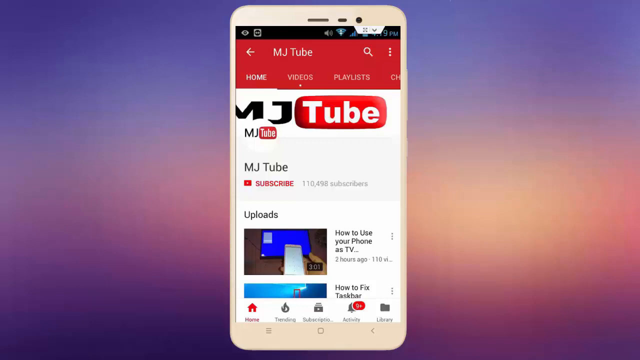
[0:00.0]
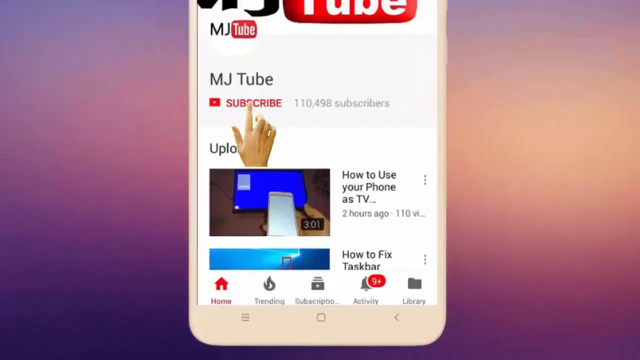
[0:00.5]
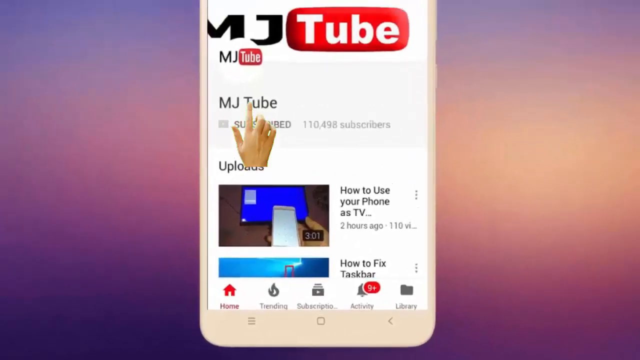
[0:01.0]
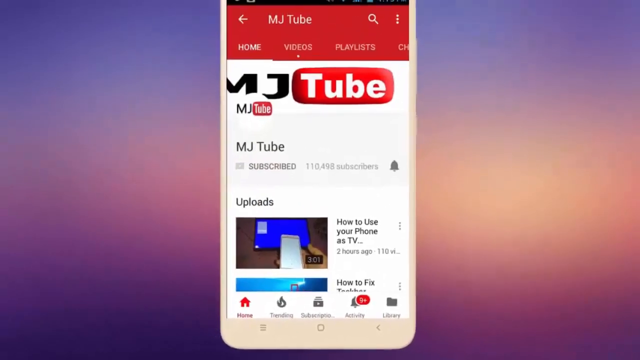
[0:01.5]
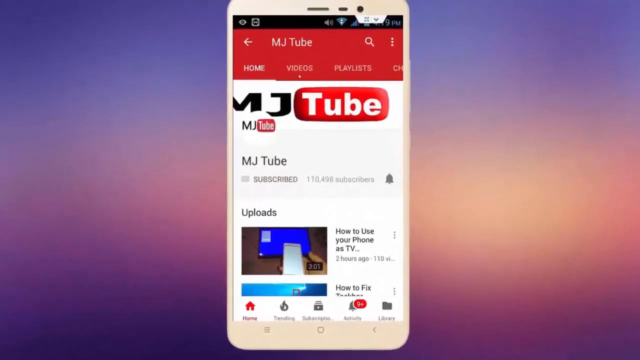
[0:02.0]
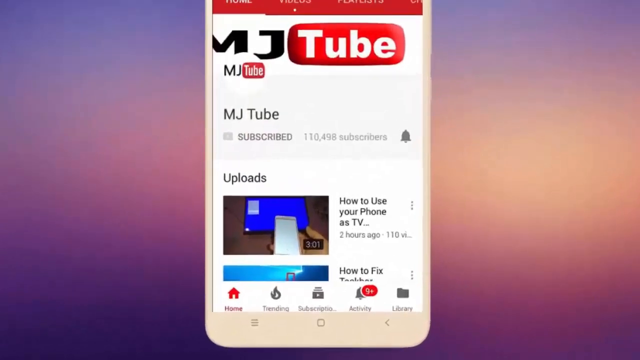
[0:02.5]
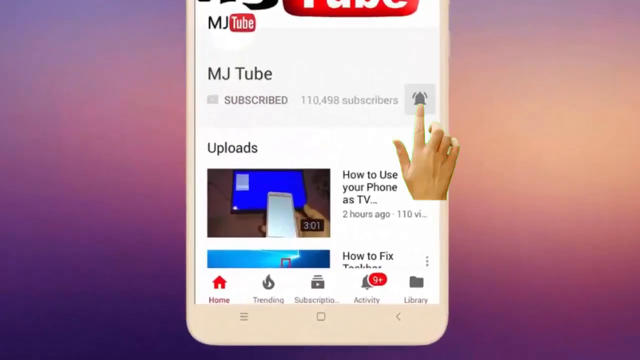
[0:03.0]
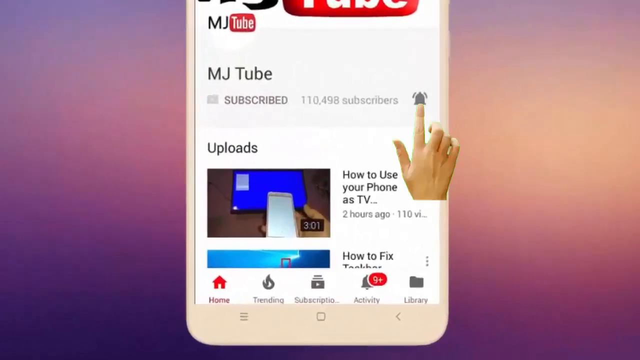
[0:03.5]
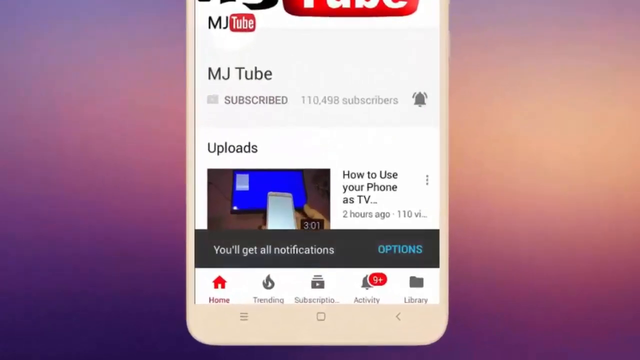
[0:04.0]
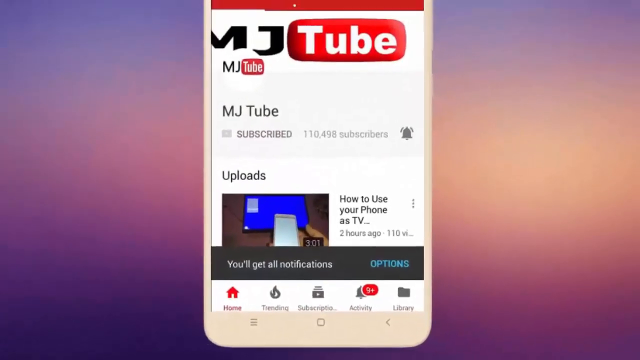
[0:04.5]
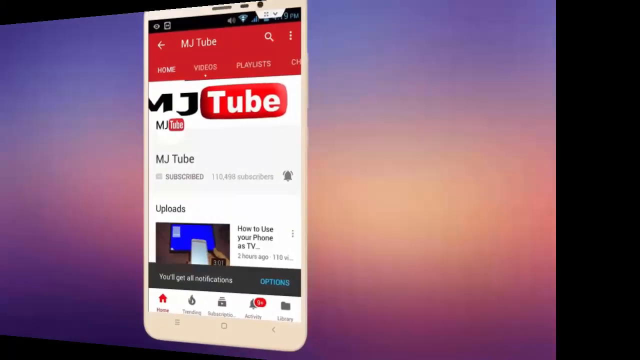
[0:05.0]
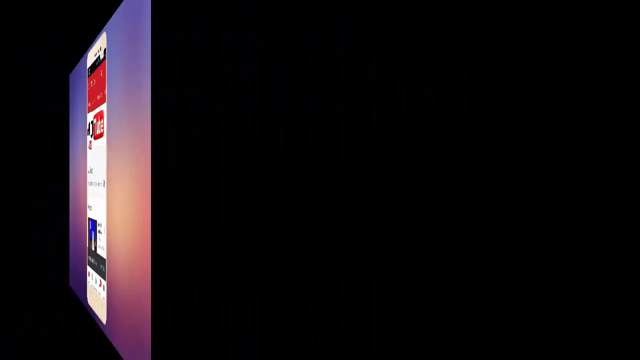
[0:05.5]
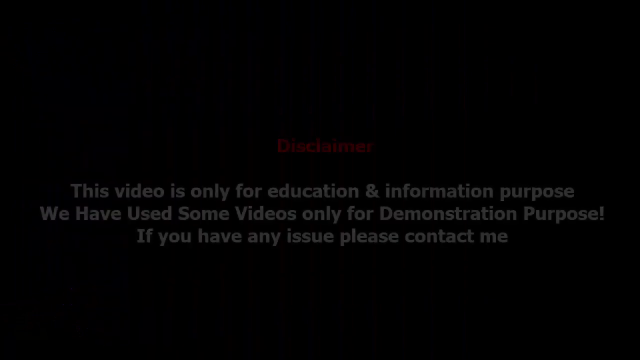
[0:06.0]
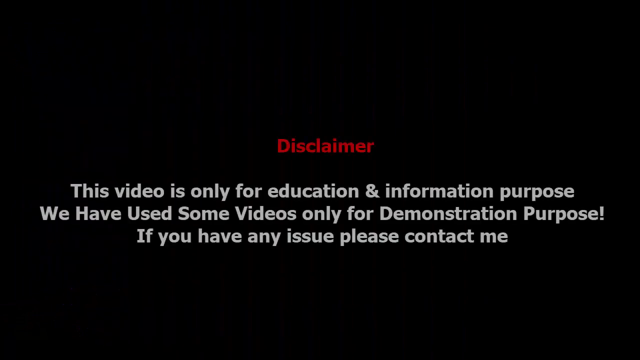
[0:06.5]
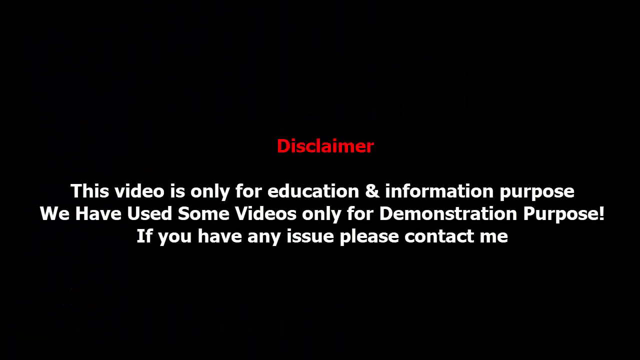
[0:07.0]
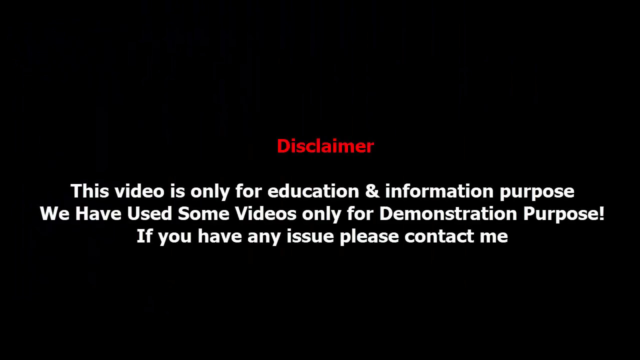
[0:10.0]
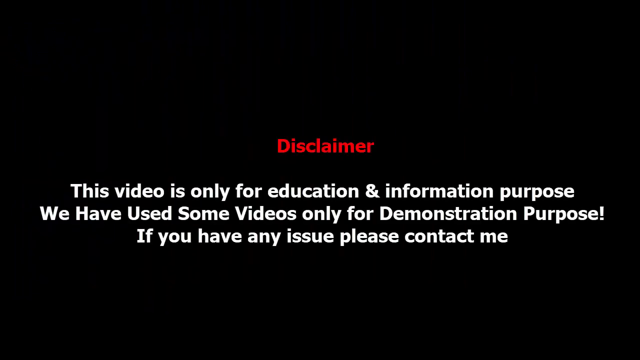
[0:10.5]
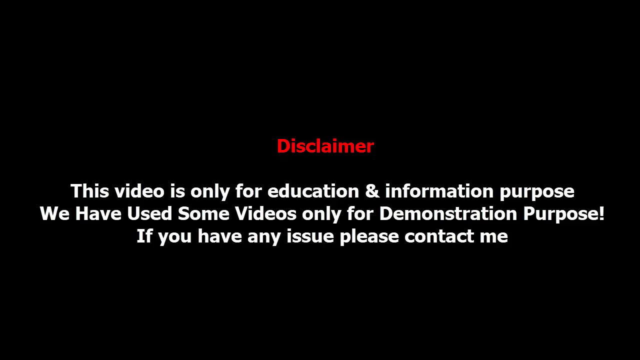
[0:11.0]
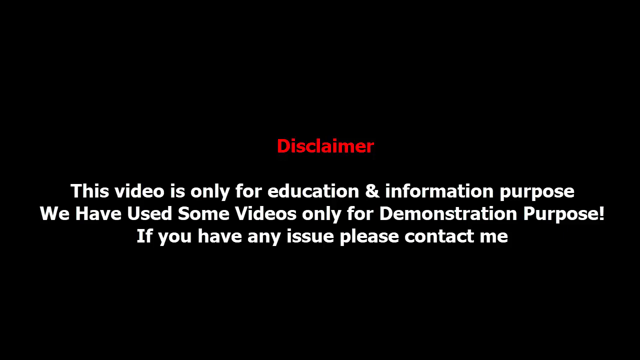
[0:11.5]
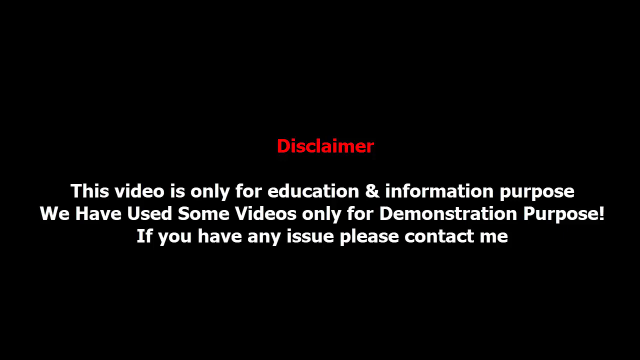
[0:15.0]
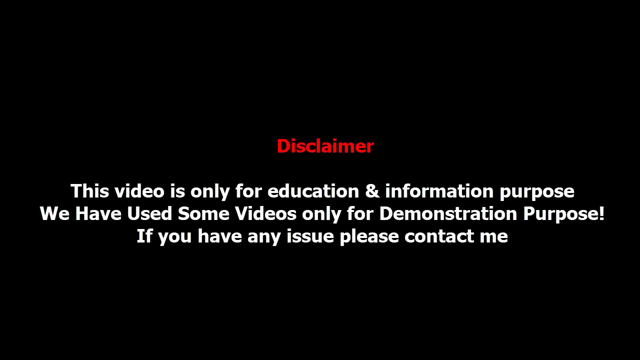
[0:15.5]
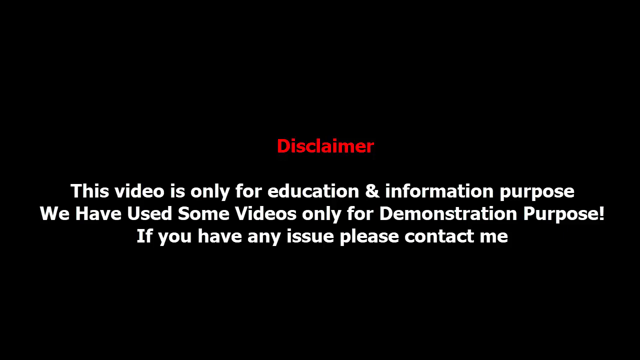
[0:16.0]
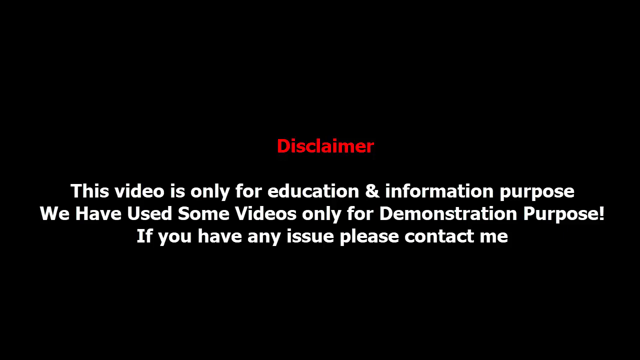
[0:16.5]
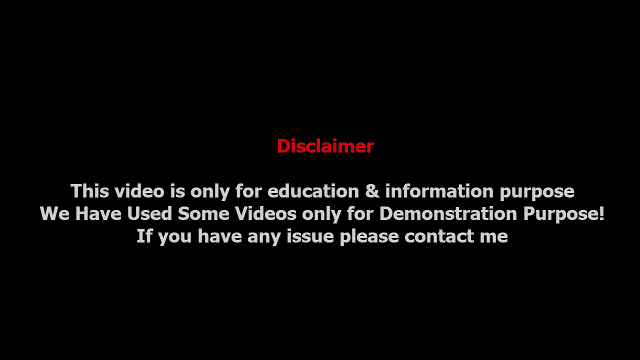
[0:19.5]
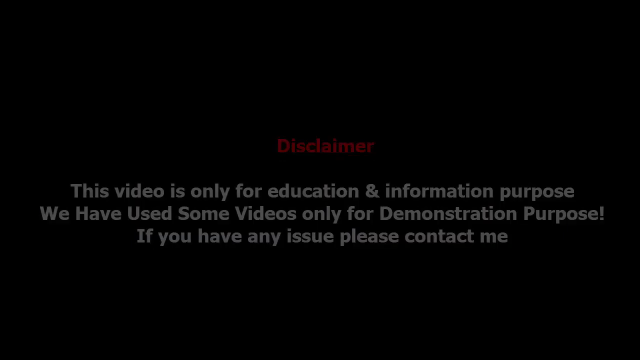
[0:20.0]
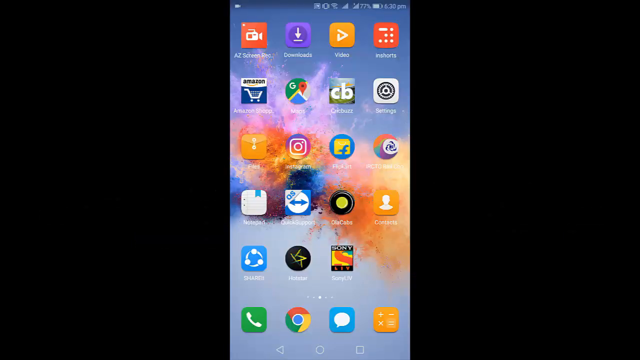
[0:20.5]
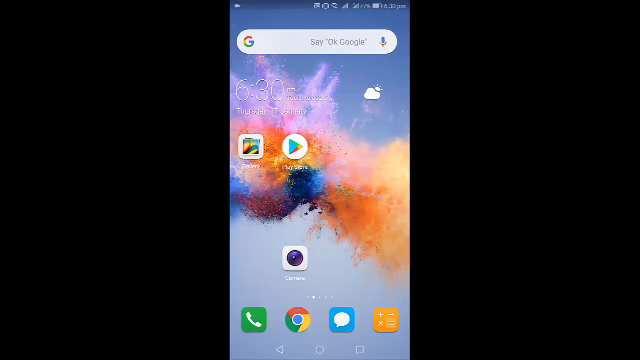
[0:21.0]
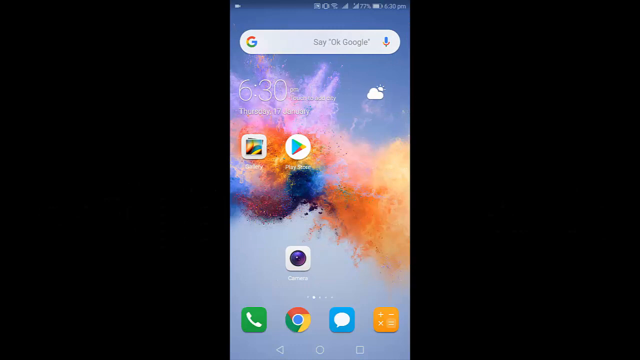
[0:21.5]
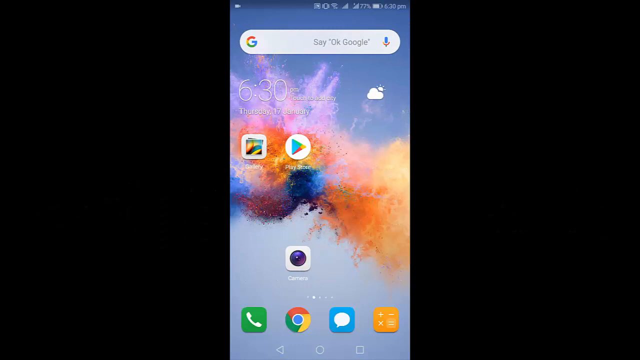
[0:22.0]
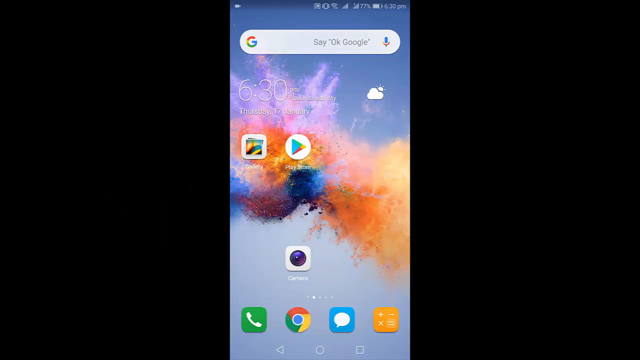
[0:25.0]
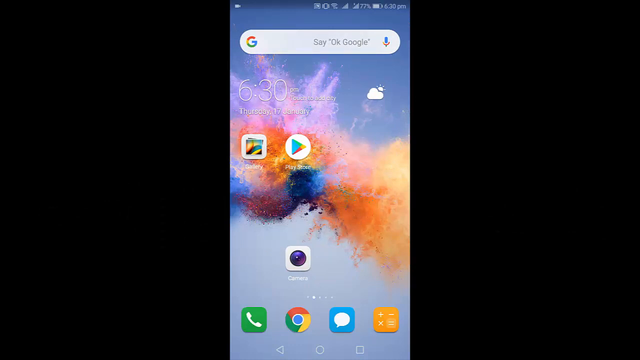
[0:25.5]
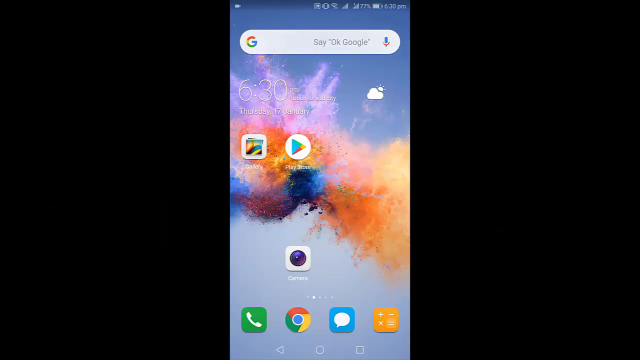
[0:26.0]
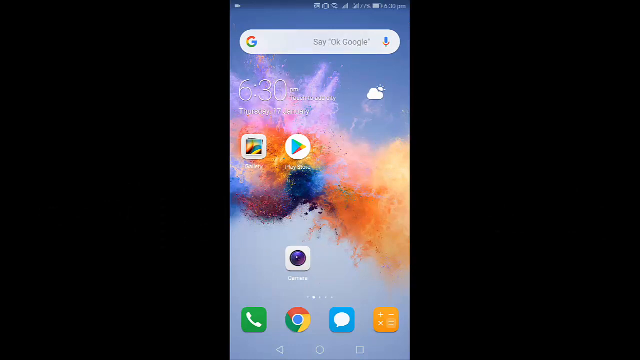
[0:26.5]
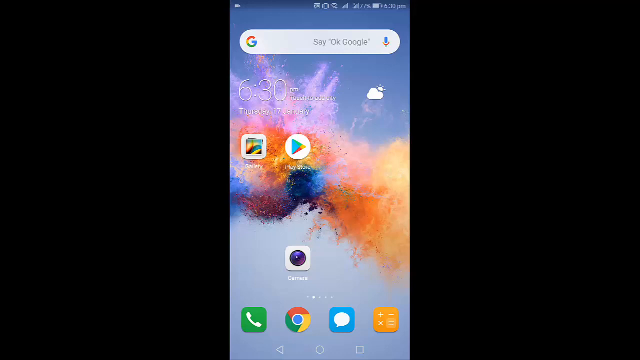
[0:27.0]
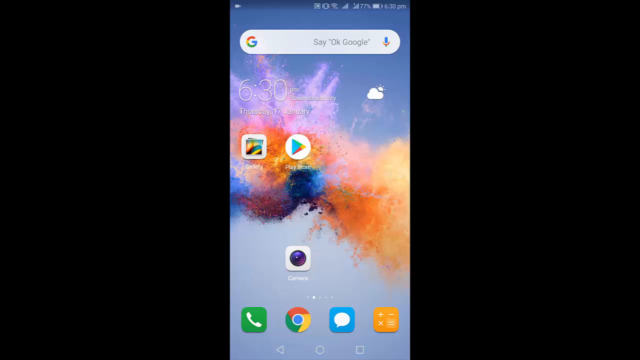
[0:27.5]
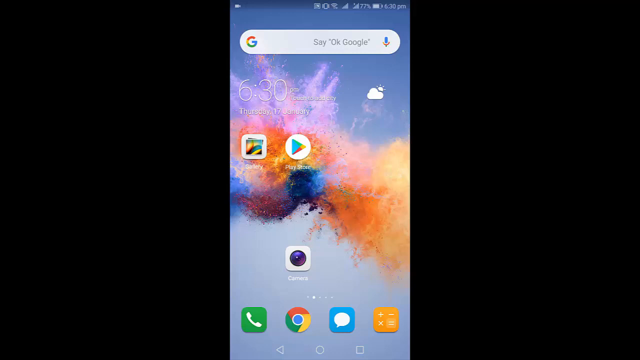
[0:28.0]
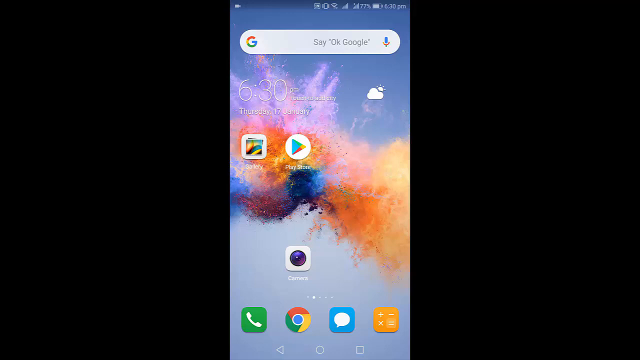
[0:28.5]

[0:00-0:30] The video opens on a phone whose screen shows the YouTube channel MJTube with 100,000 subscribers; this appears to be the channel making the video, which appears to be a tutorial of some sort. The view zooms in on the subscribe button with a hand, with notifications to the right. A disclaimer then appears reading "this video is only for education and information purposes. We have used some videos only for demonstration purpose! If you have any issues, please contact me." It stays on that screen for maybe a few seconds before switching to an Android phone screen. The home screen has a few icons and the standard Google search bar, a time widget and a weather widget, along with apparently the gallery app, the camera app, the phone app, Chrome, Messenger, Calculator and the Play Store app.